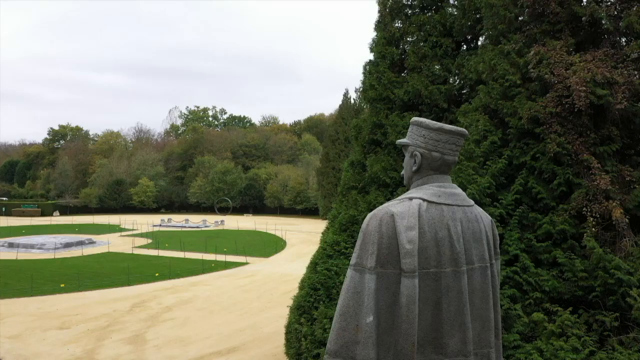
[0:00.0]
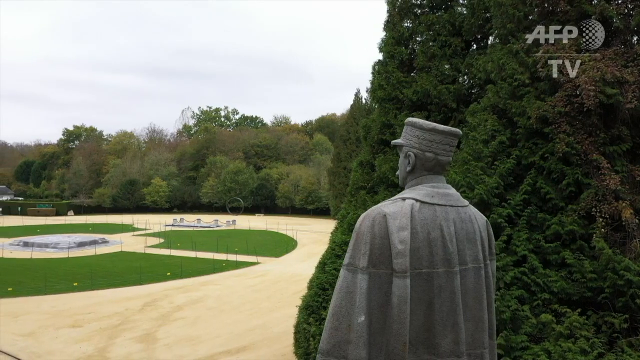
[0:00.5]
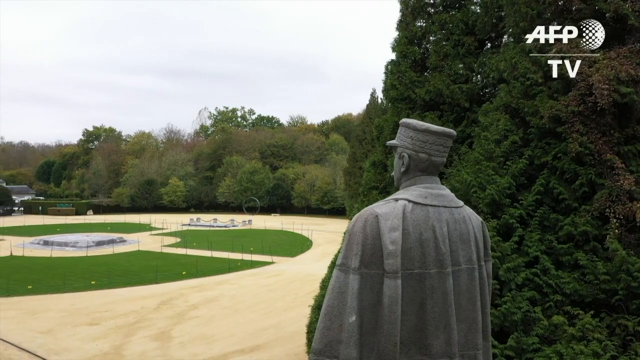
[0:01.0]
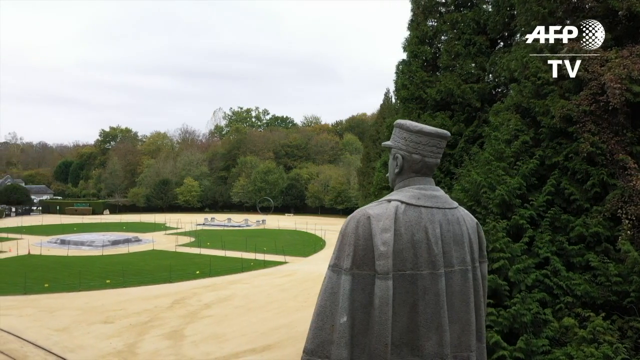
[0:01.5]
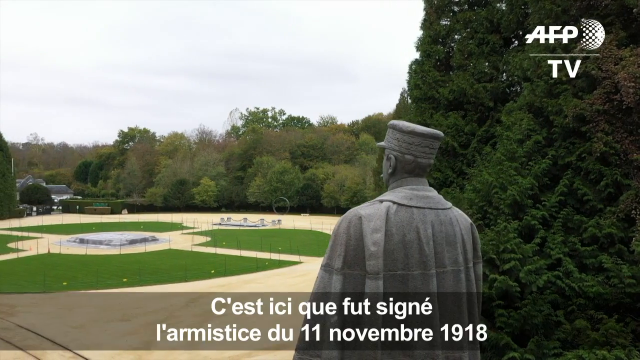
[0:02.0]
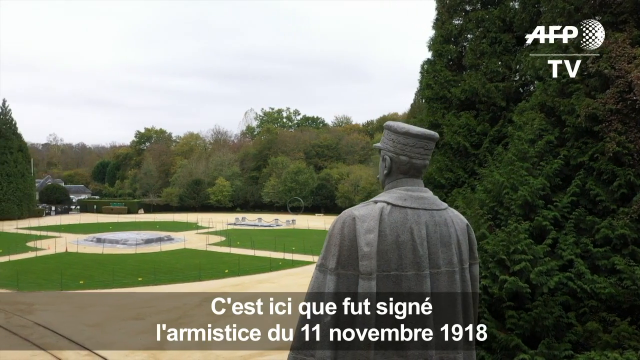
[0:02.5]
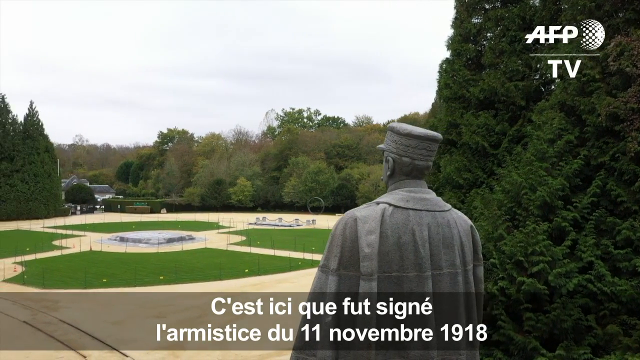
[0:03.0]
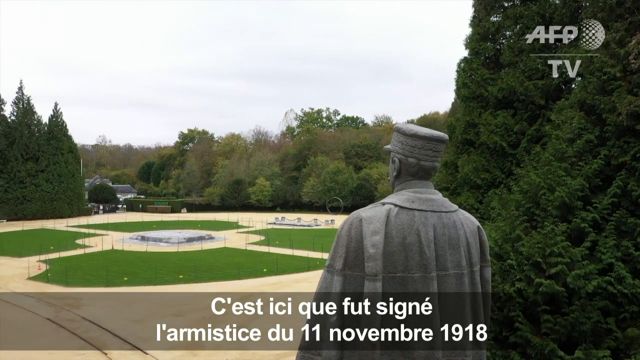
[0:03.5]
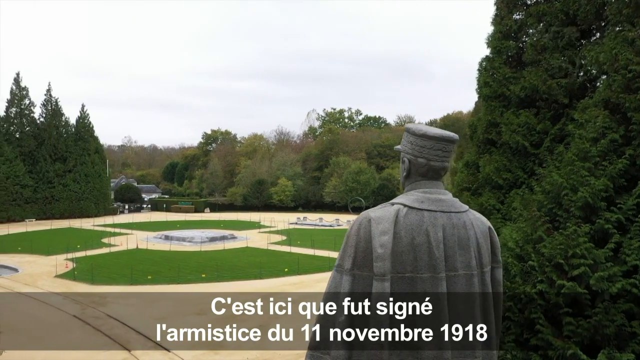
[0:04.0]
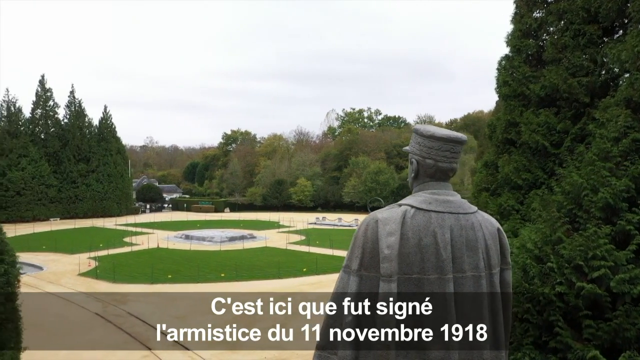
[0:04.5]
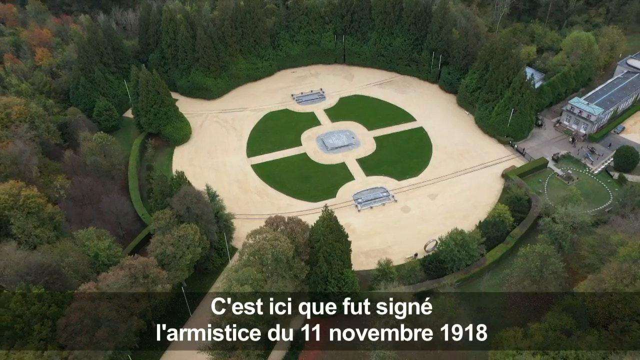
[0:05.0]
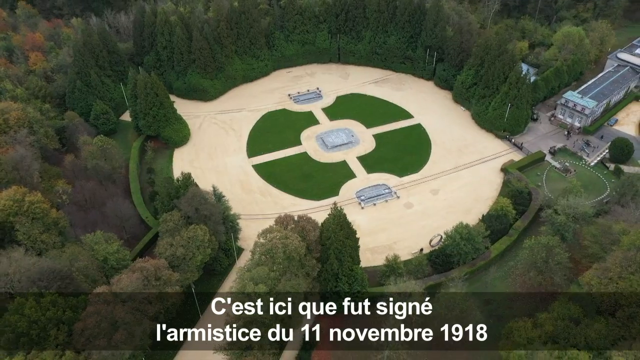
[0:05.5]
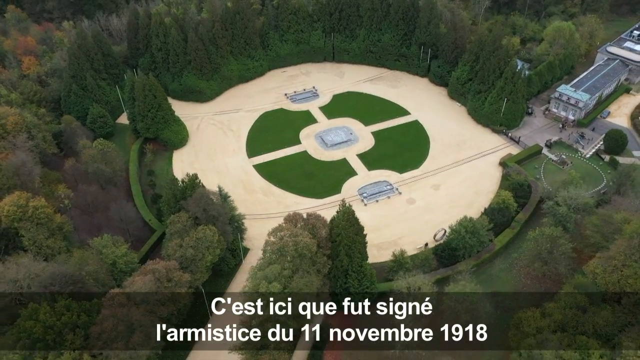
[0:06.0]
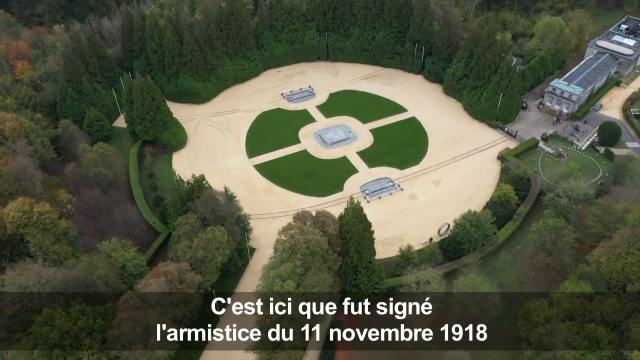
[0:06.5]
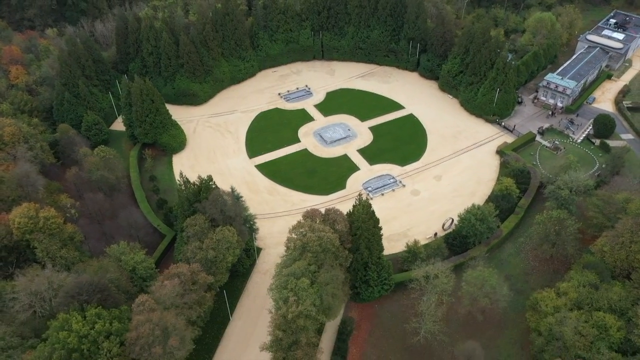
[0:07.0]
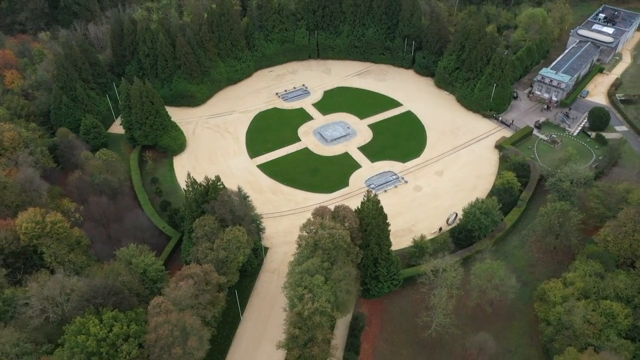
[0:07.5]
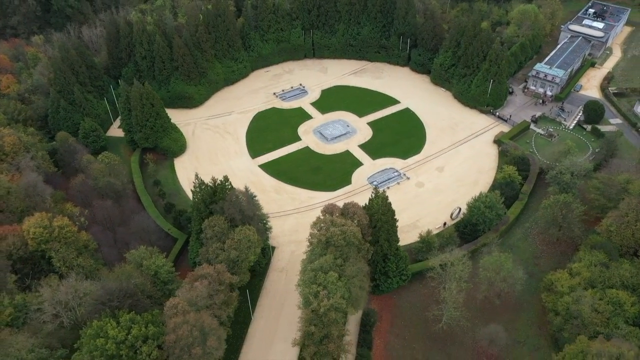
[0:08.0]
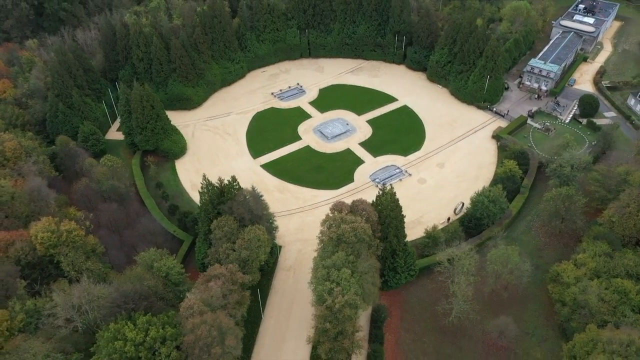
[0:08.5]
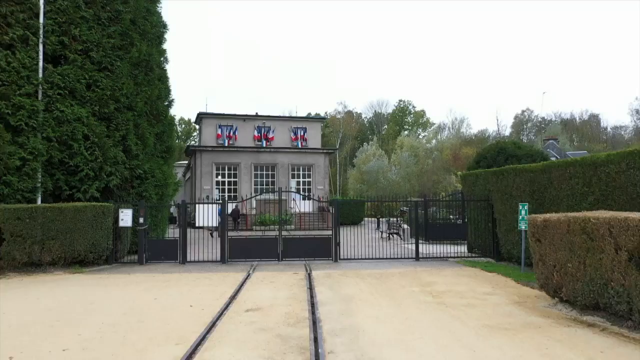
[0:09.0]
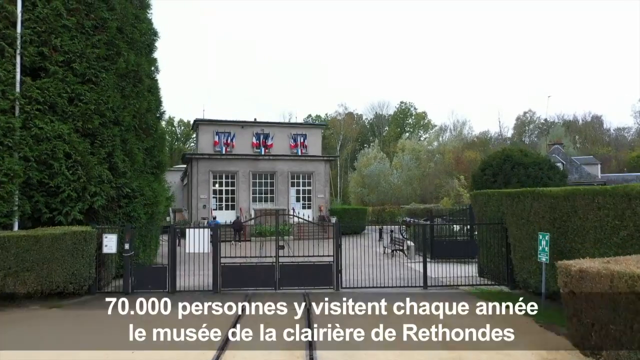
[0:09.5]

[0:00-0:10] The video opens on a formal garden surrounded by a very wide pathway. In the foreground is a tall grey stone statue of a man with a moustache, wearing a cap and a cloak; he is standing next to a mature tree, overlooking the parkland. There appears to be some metal posting around the edge of the grass. The path forms a cross in the centre of segmented grass, and there is a stone area in the centre of a circular square shape. Mature trees surround the area. The camera then pans and French words appear: "C'est ici que fut signe l'armistice du 11 novembre 1918". Next comes an overhead shot of the circular formal garden, with what looks like a plinth for a statue in the centre. A building is at the top right of the screen.